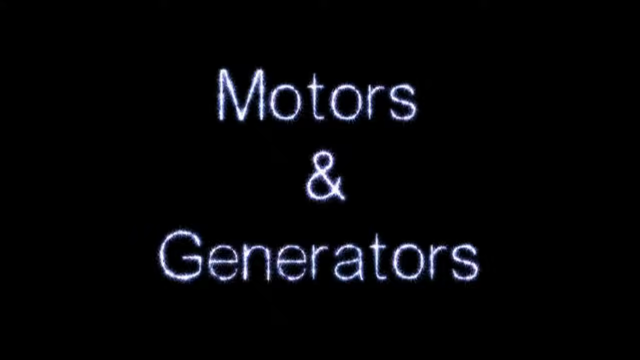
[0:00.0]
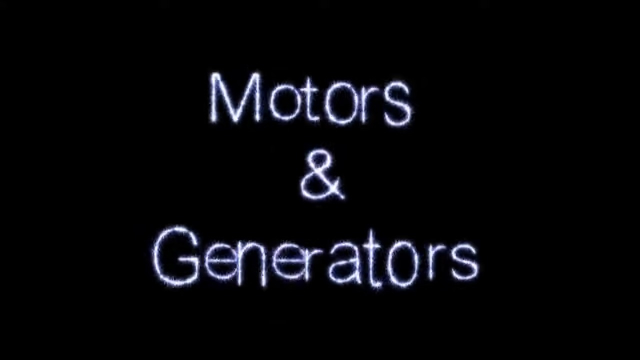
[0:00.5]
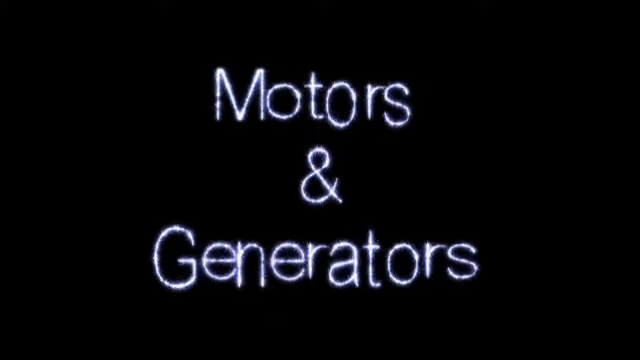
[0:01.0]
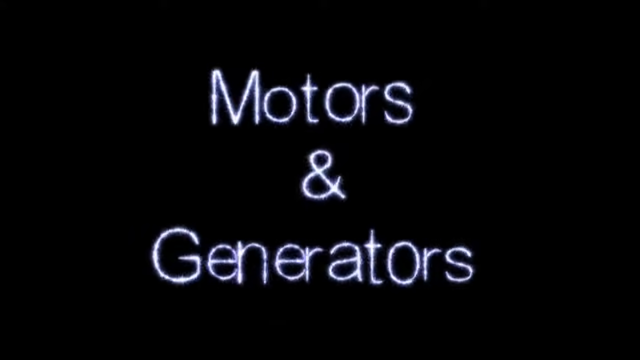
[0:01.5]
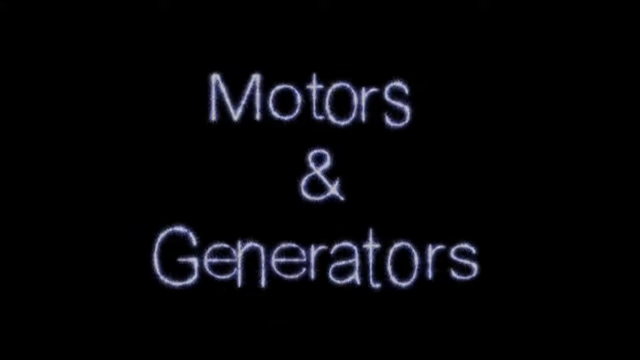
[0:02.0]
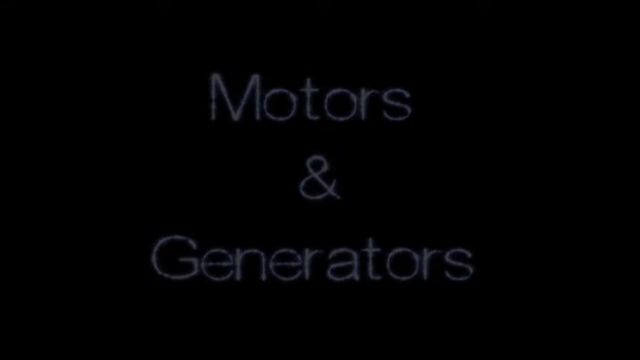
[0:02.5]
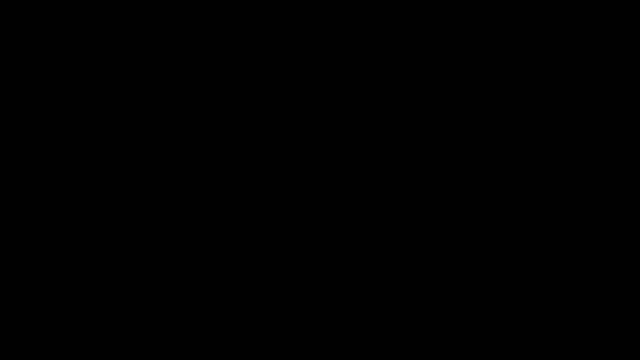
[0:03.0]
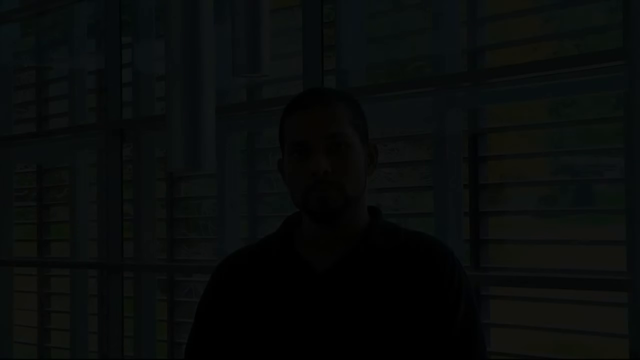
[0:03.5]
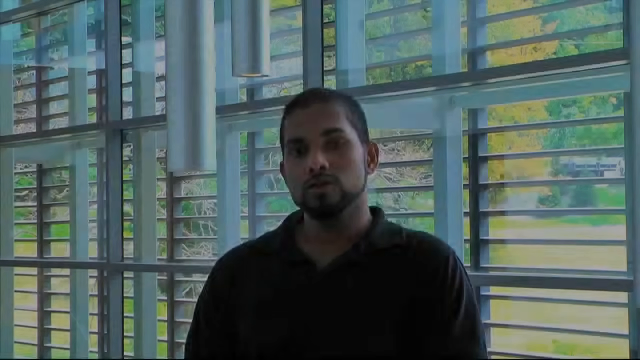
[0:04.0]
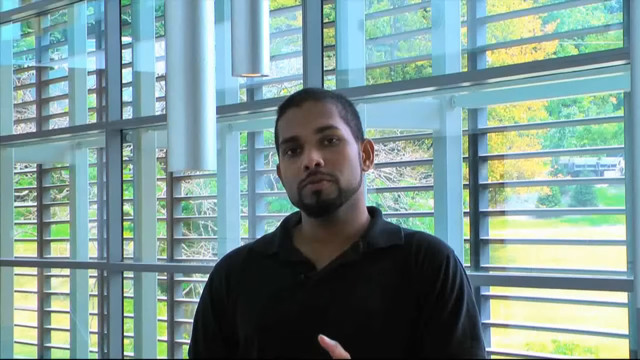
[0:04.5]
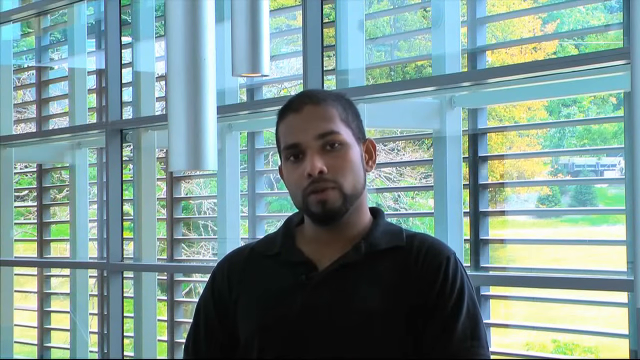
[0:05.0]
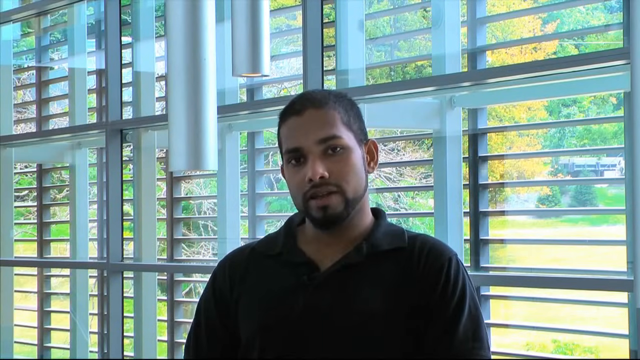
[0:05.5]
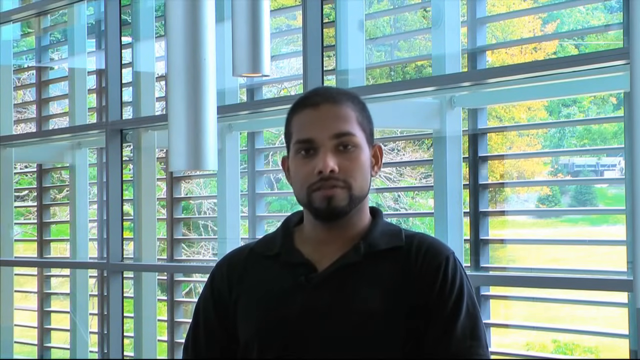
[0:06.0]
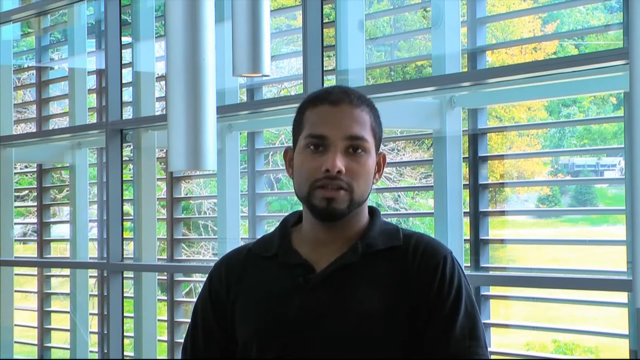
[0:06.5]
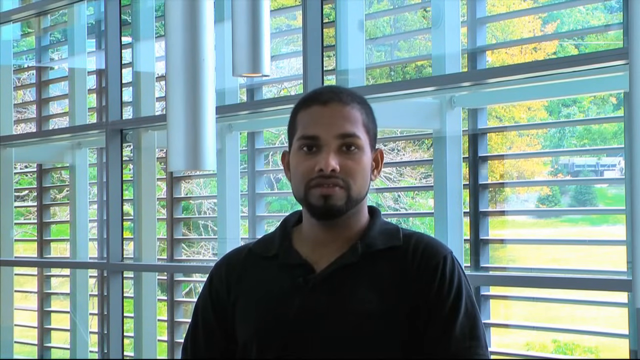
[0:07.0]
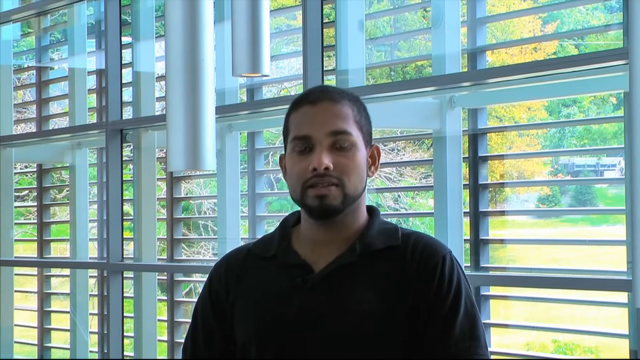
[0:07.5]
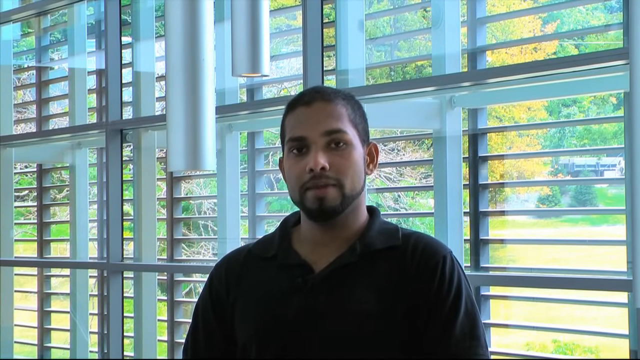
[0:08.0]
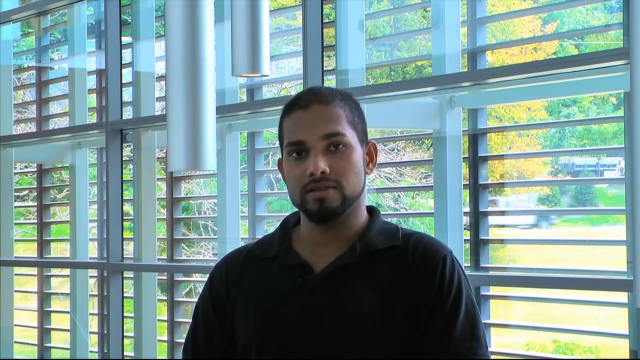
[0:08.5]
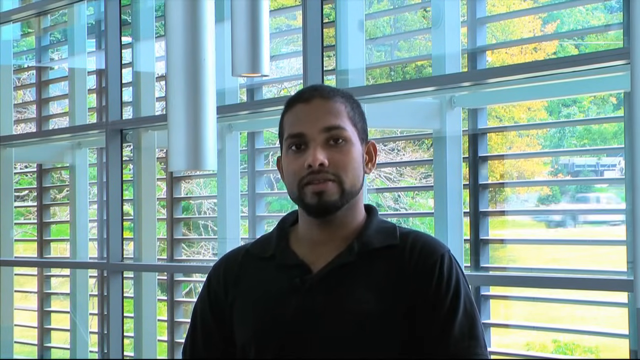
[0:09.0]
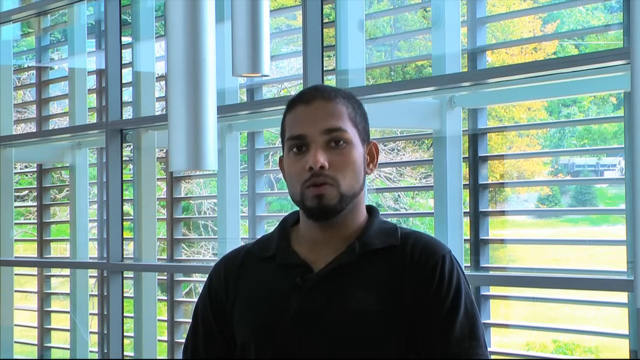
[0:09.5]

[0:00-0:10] The video opens on a black screen as the words "motor and generators" appear in the center with an electric-style effect, each letter shaking individually. The words fade, and a man appears in the middle of the screen with windows behind him and greenery outside on a sunny day. He has dark features and wears a dark collared shirt, and he is speaking. Cars drive by in the background as he continues speaking.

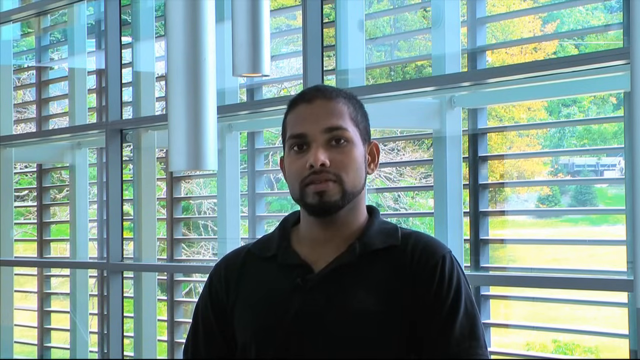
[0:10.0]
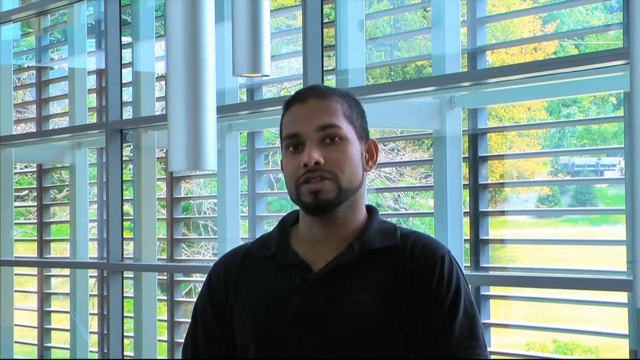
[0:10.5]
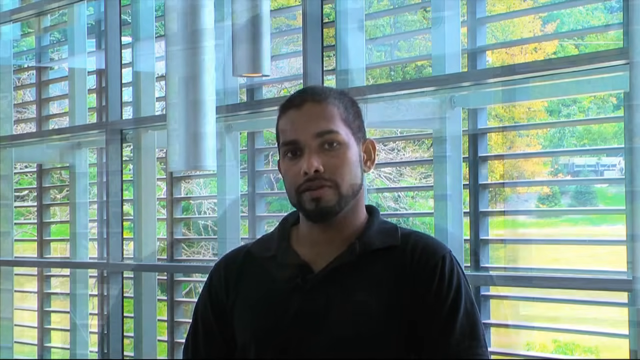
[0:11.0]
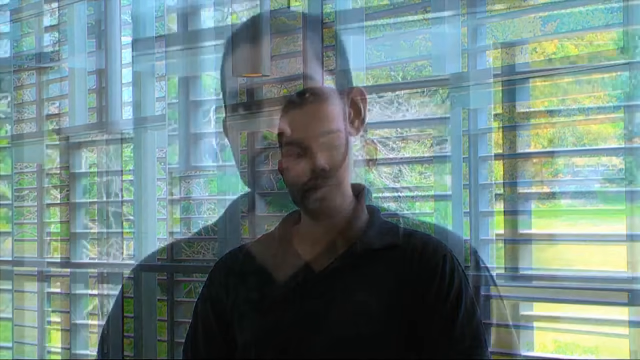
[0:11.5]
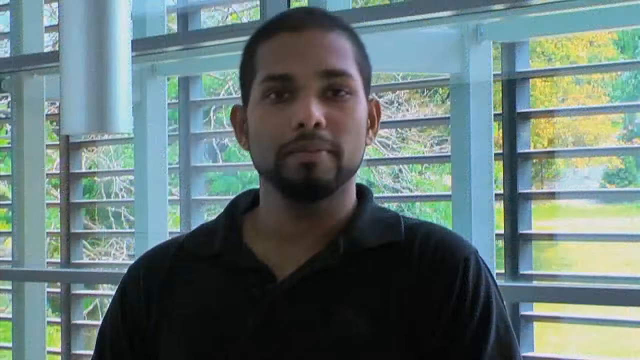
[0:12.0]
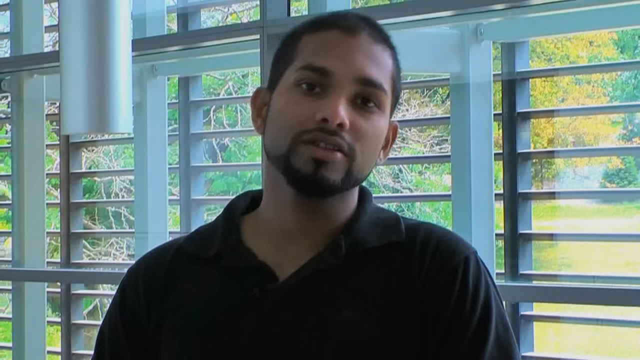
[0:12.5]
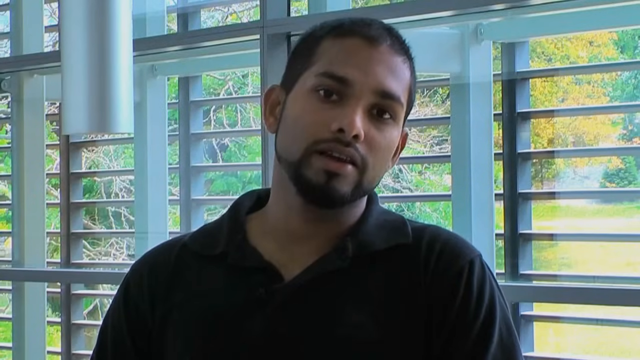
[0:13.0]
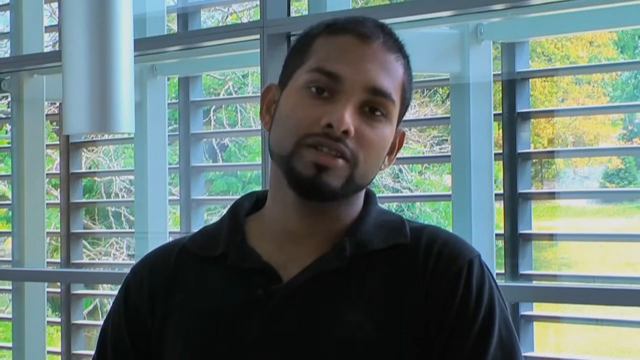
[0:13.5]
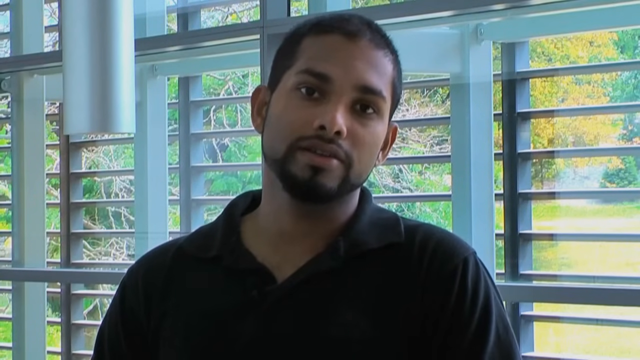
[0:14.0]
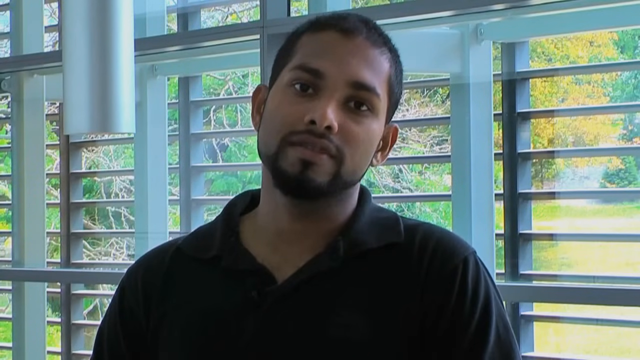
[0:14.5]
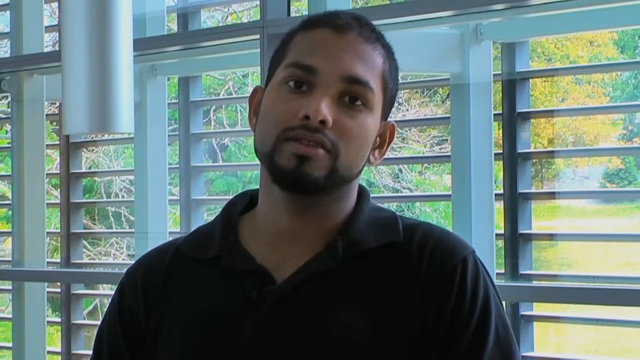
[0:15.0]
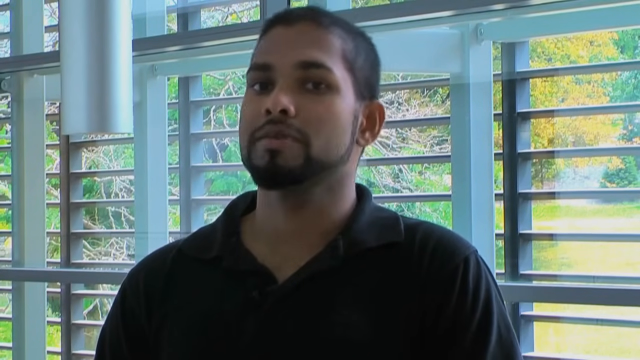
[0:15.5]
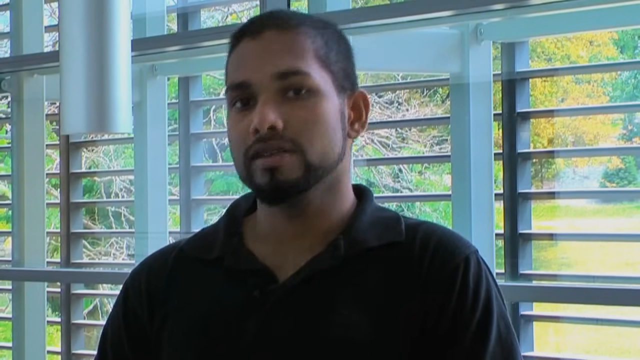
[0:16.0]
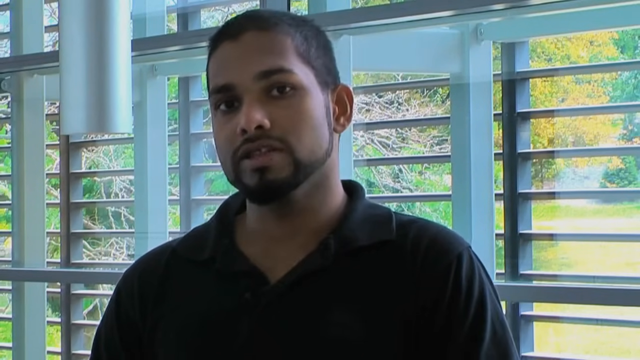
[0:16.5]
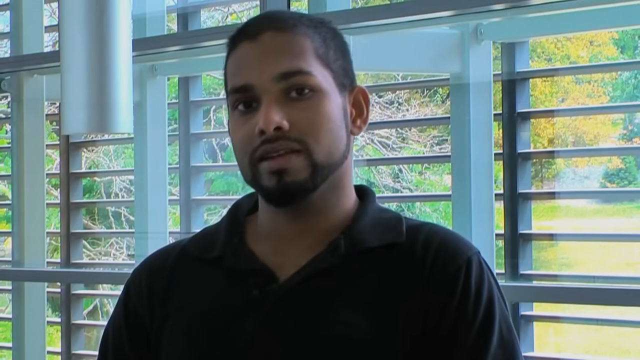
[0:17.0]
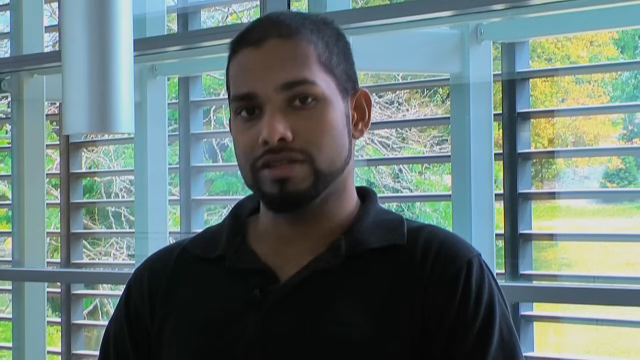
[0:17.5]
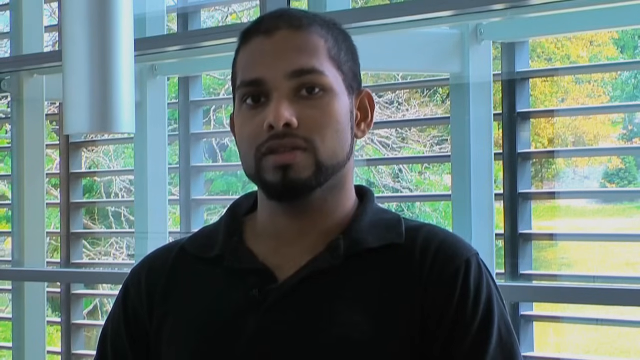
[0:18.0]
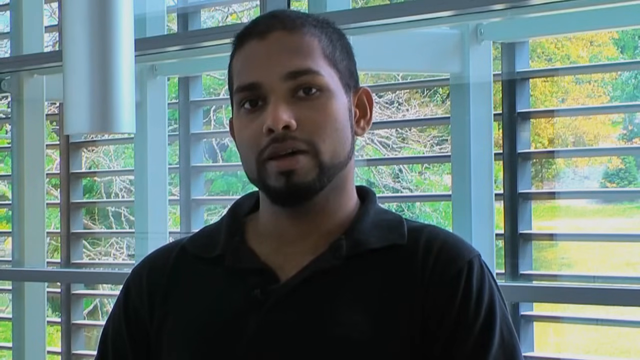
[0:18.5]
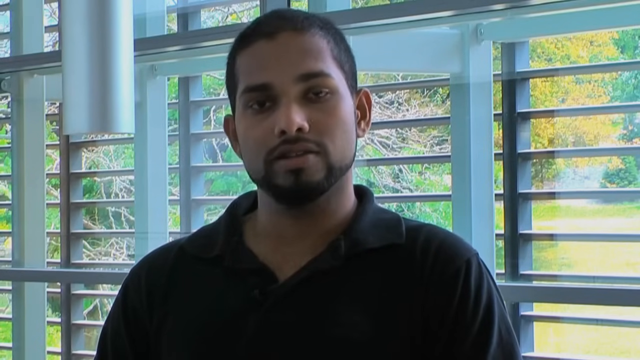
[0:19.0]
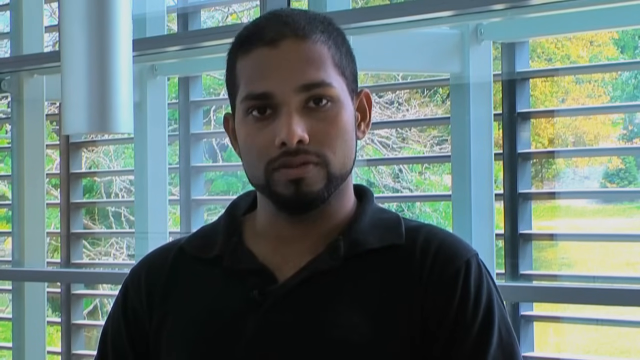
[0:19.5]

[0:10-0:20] The man keeps speaking to the camera, and the shot slightly fades into a closer view of him in the same spot. As he speaks, he turns his head slightly to the right of the camera, talking at an angle, before bringing it back straight. He continues making these slight head movements while talking, with not much emotion on his face. Near the end he lifts his head slightly up, then lowers it and looks straight into the camera.